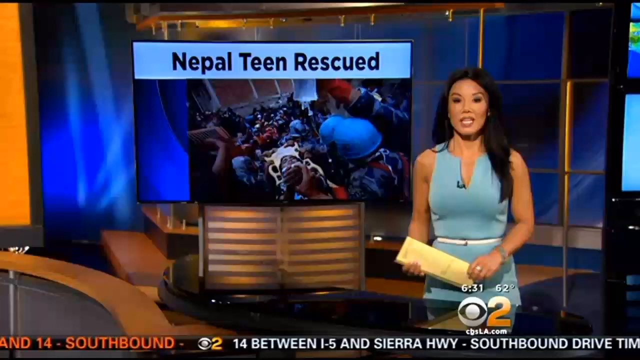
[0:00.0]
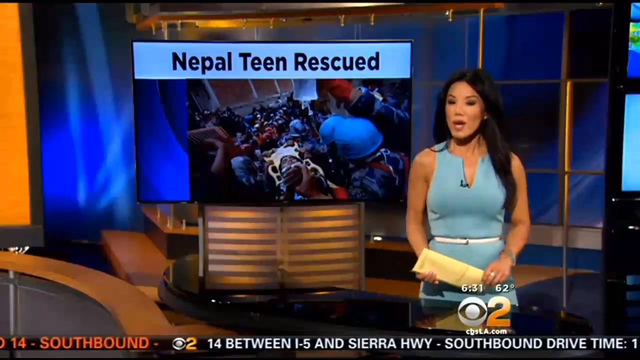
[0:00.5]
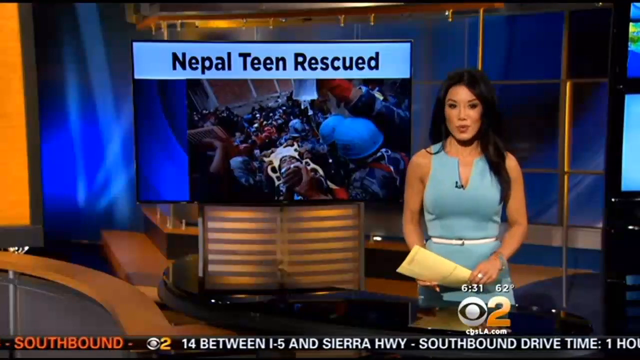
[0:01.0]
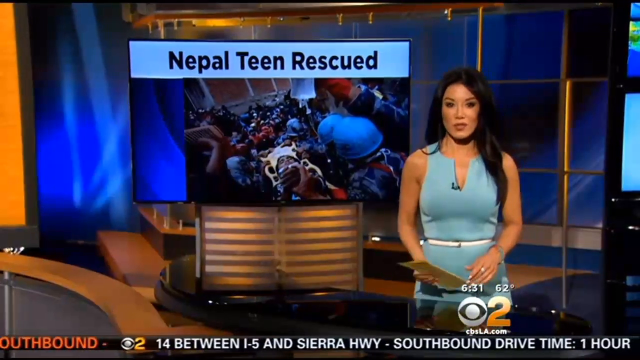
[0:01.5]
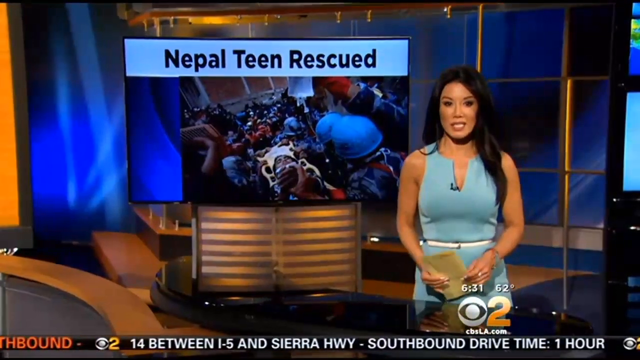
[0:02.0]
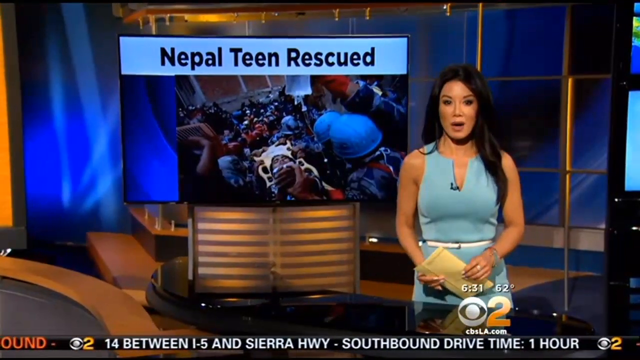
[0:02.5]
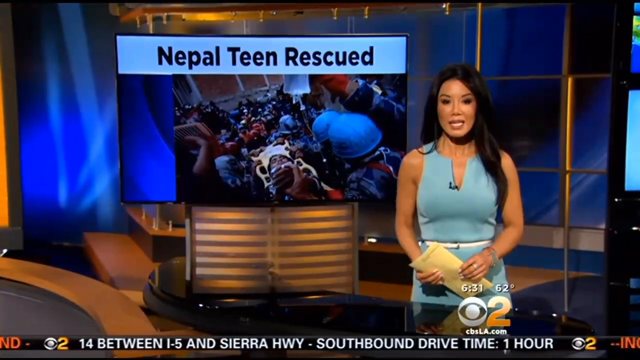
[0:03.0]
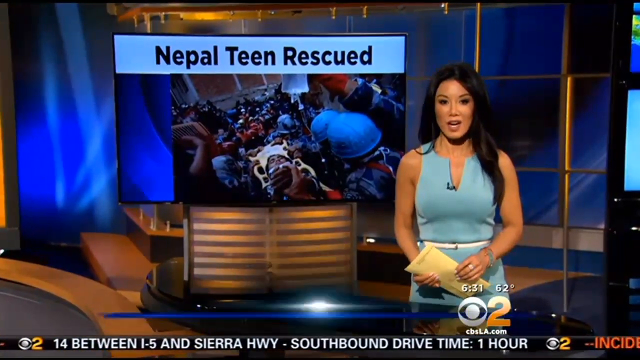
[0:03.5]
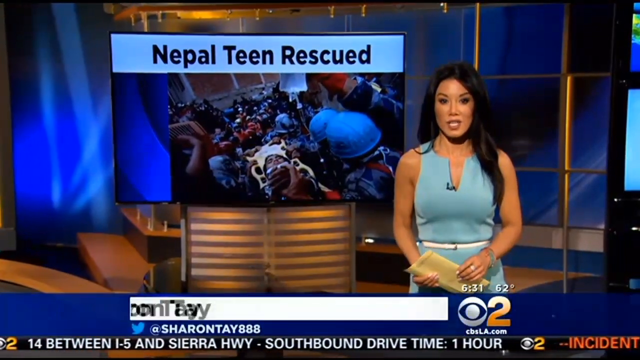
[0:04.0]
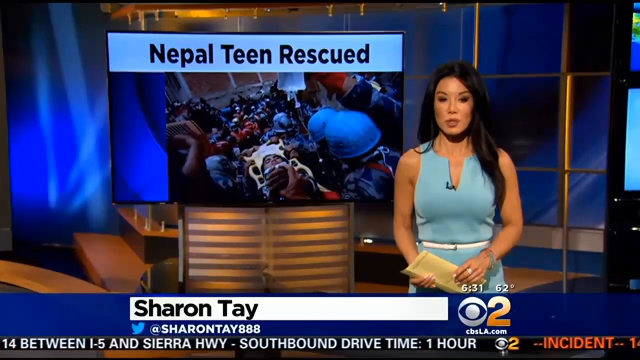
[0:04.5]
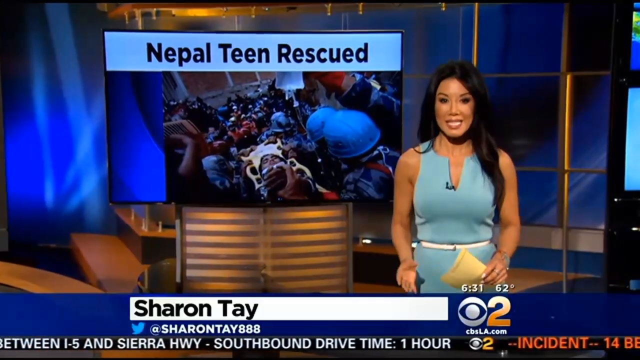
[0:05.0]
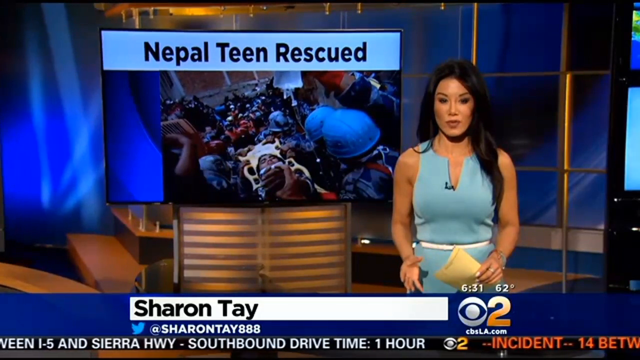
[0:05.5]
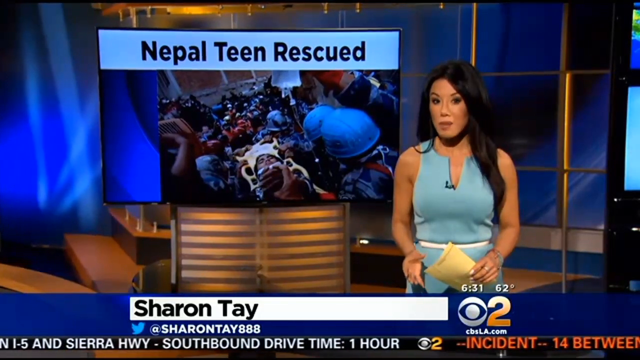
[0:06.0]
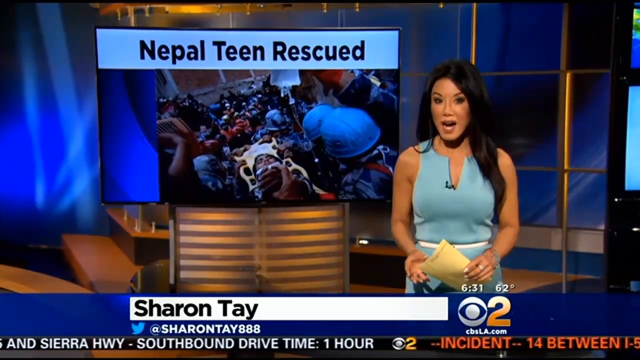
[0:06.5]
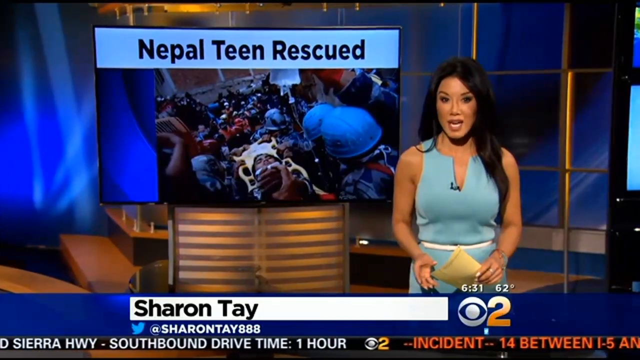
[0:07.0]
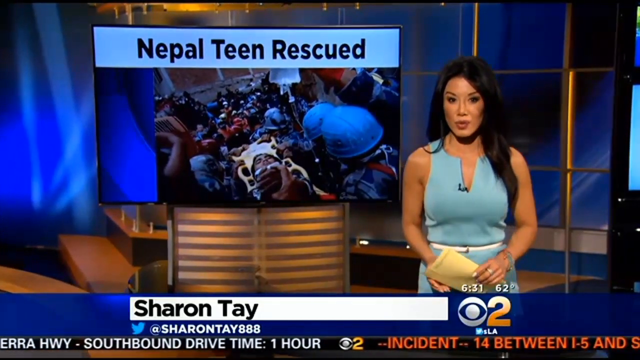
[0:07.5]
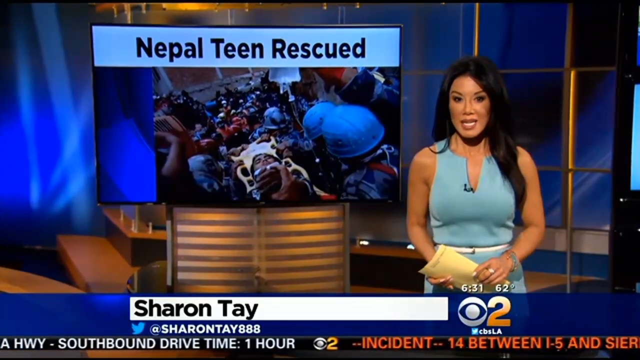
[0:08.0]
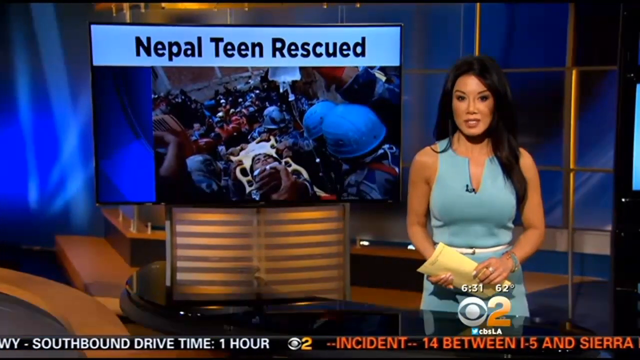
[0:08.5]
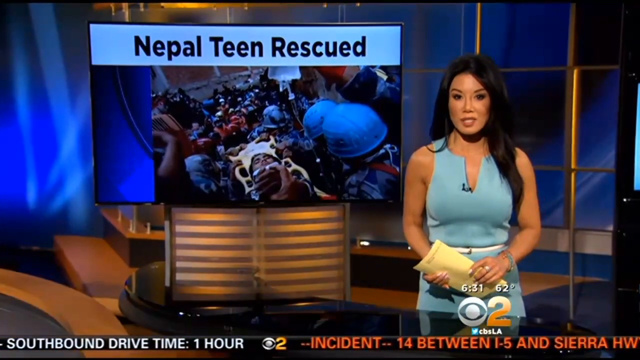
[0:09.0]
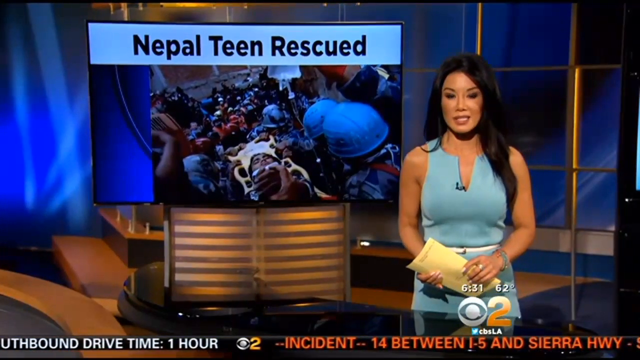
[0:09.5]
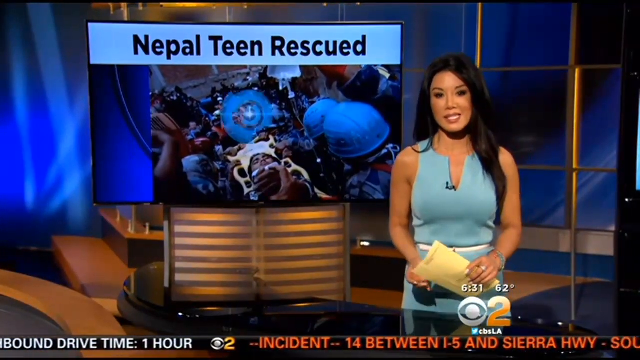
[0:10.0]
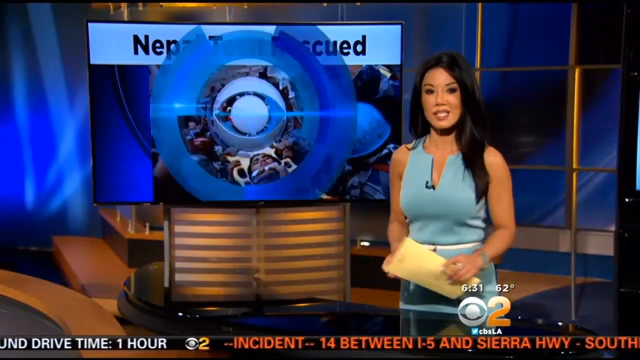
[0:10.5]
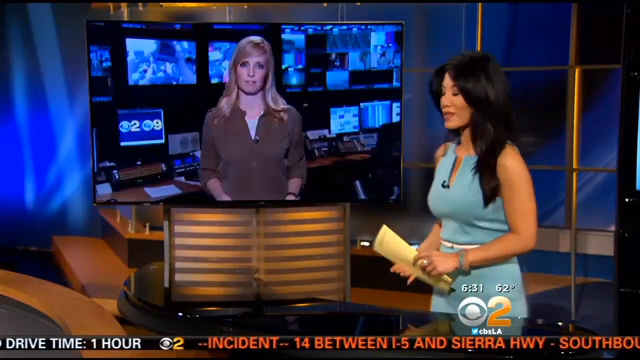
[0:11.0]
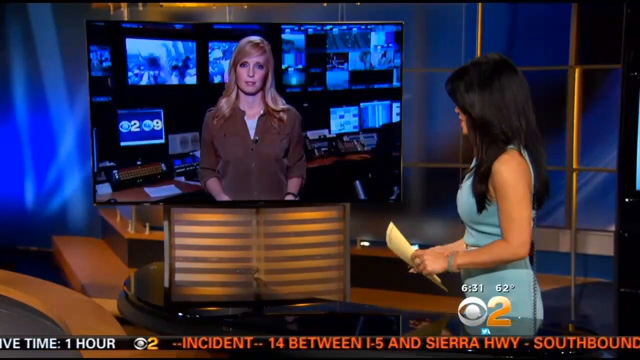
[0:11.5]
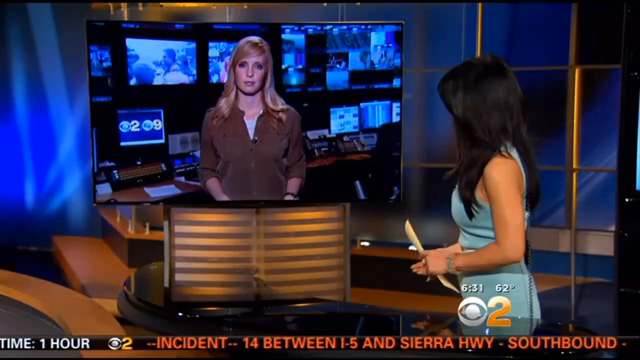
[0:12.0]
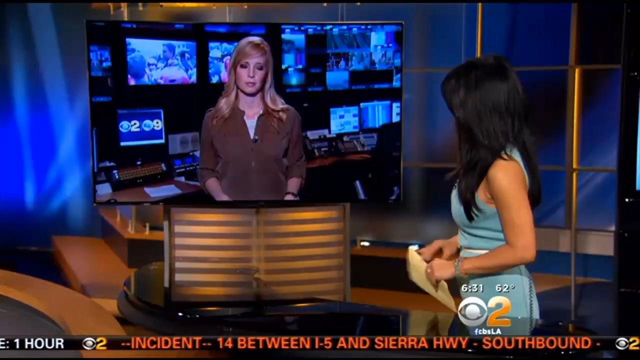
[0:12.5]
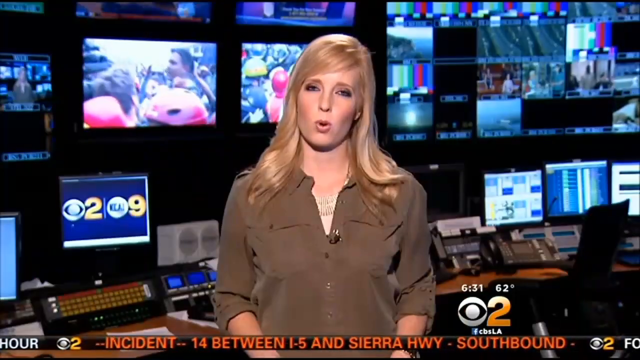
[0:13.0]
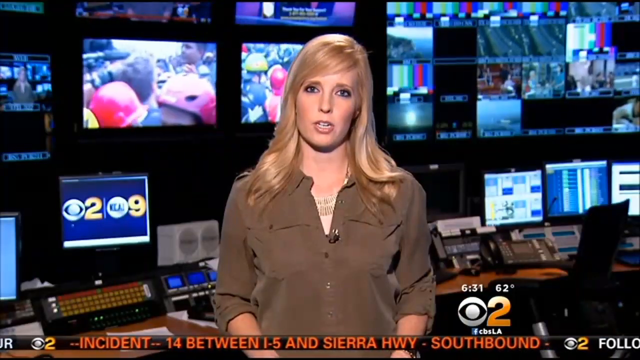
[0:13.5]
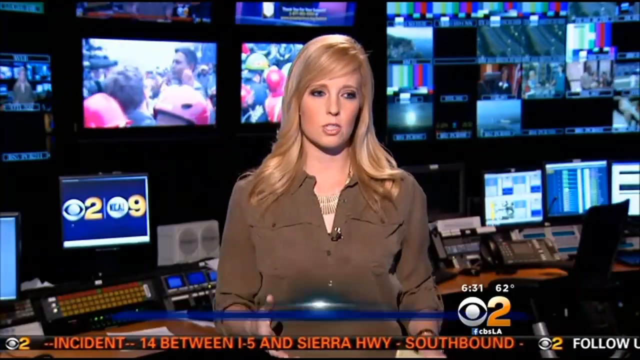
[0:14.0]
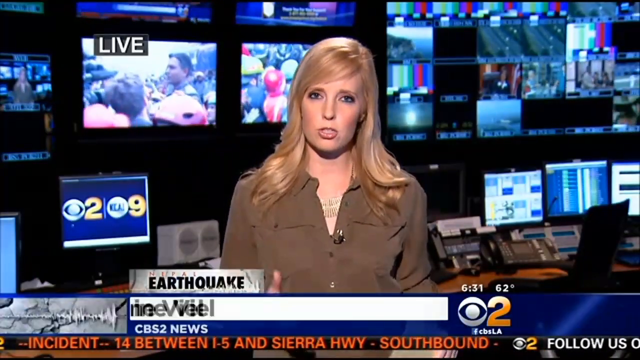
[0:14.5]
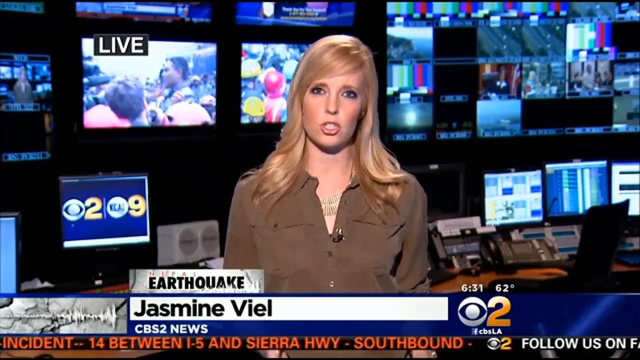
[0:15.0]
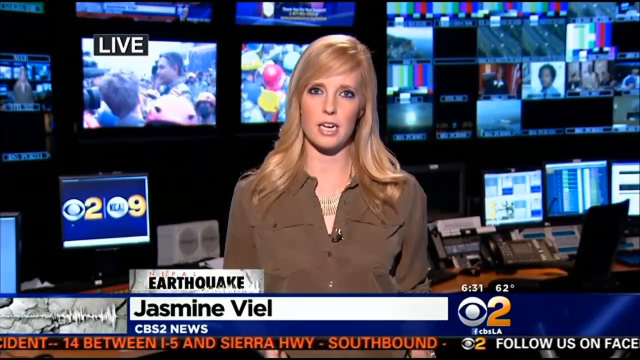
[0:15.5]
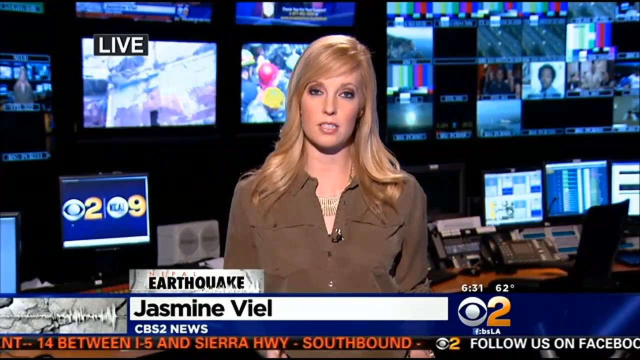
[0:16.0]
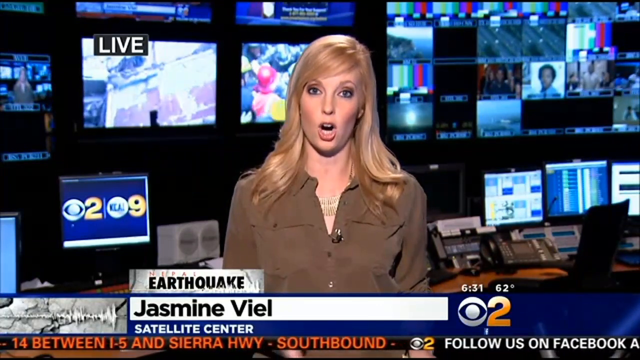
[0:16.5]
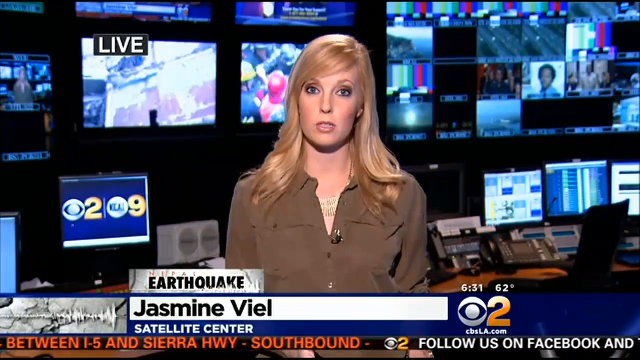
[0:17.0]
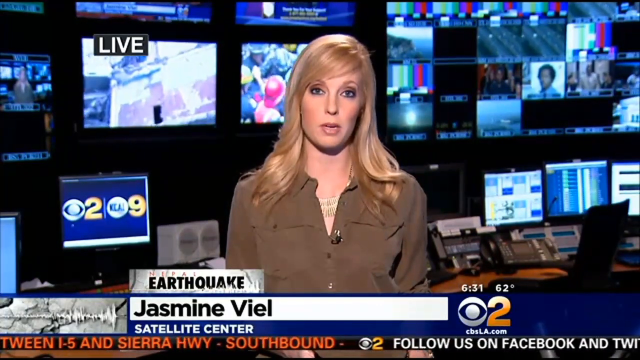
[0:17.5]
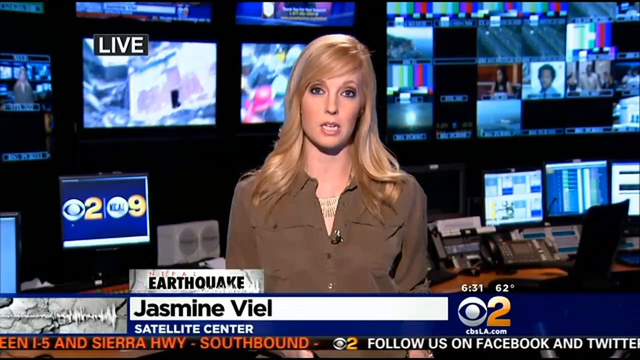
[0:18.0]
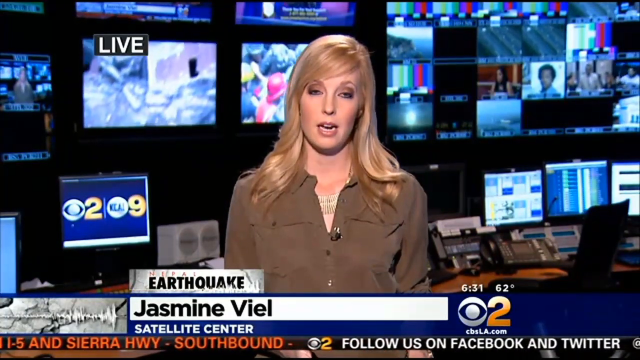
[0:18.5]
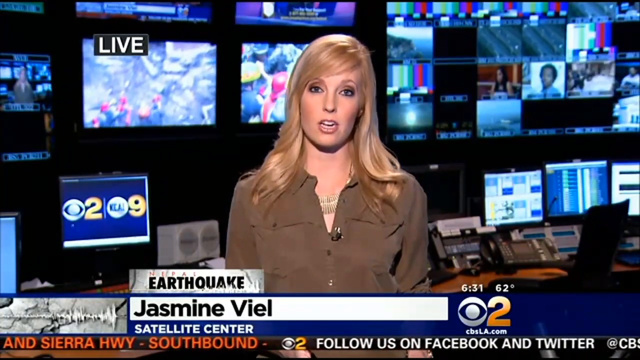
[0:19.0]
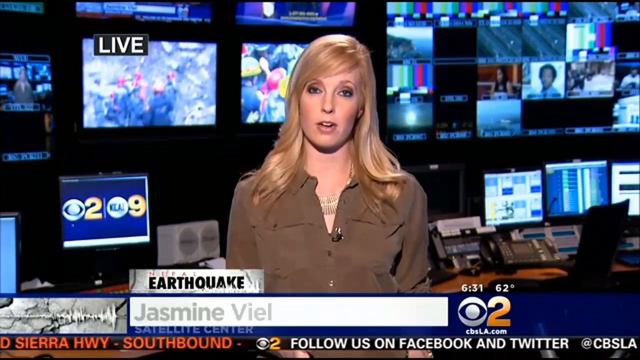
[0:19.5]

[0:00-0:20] A woman is on the right-hand side of the screen. She is an Asian woman with long black hair, wearing a light blue dress with a white belt around her waist, and she has a black microphone clipped to her collar. She holds a yellow piece of paper in her hands. Behind her is a television screen with the headline "Nepal Teen Rescued." Below her is a ticker with her name, which reads "Sharon Tay." She turns to the TV screen to talk to another reporter, a blonde woman wearing a brown button-up shirt with a microphone clipped to her collar. The blonde reporter is standing in front of a wall of many screens, which are blurry and hard to see. Below her is the text "earthquake" and her name, "Jasmine Vale." The scene then reverts to the Asian reporter.